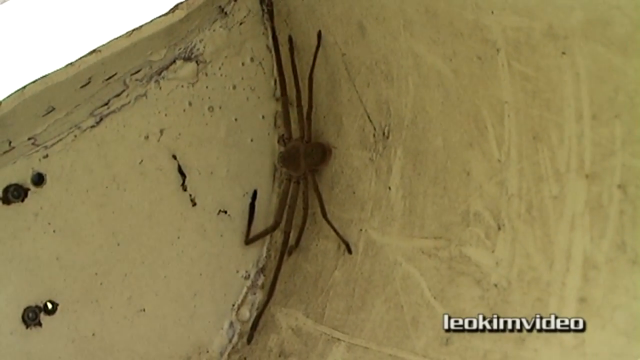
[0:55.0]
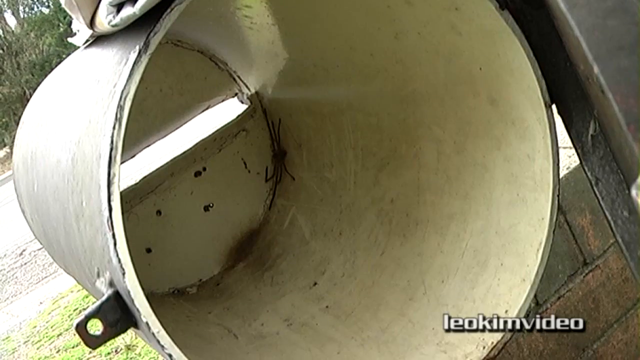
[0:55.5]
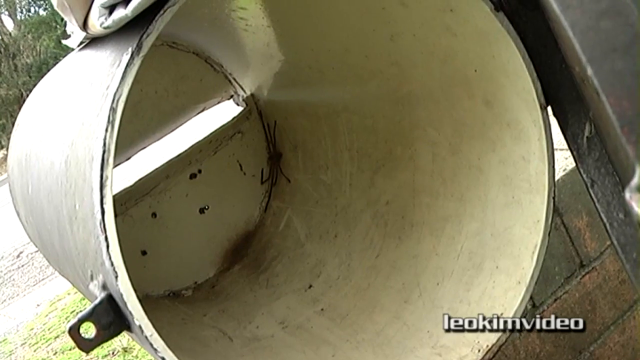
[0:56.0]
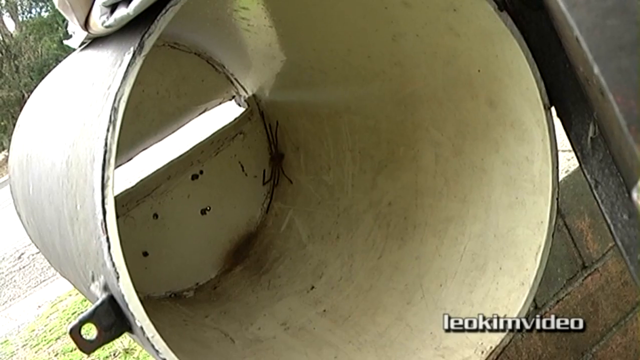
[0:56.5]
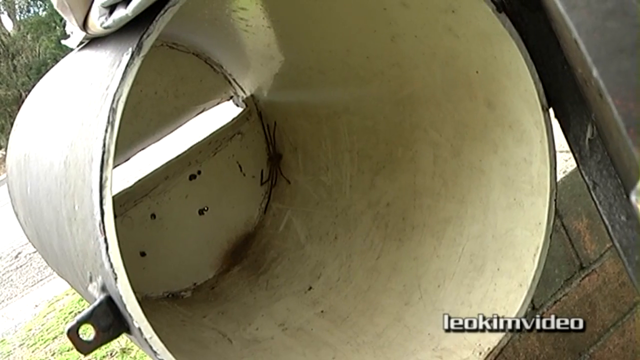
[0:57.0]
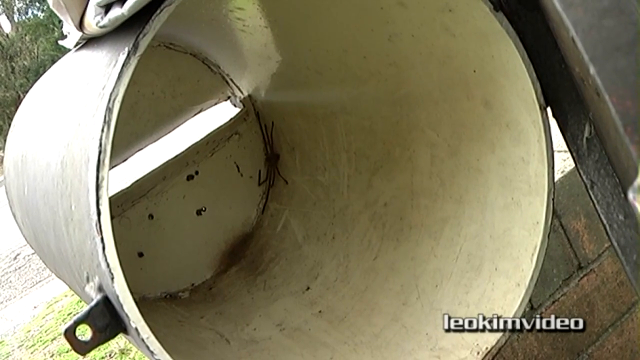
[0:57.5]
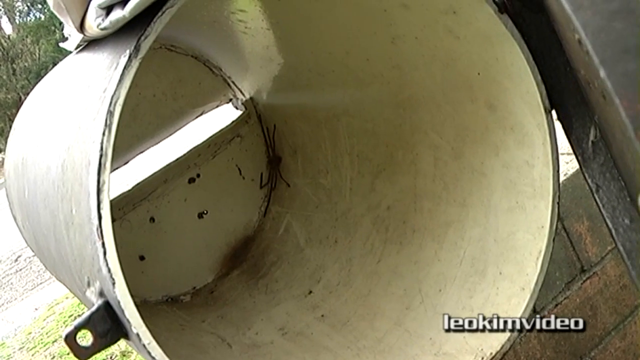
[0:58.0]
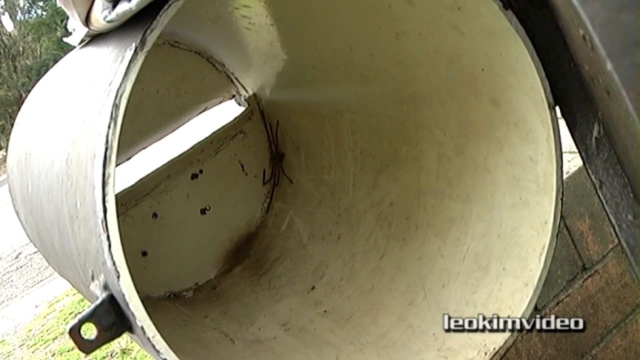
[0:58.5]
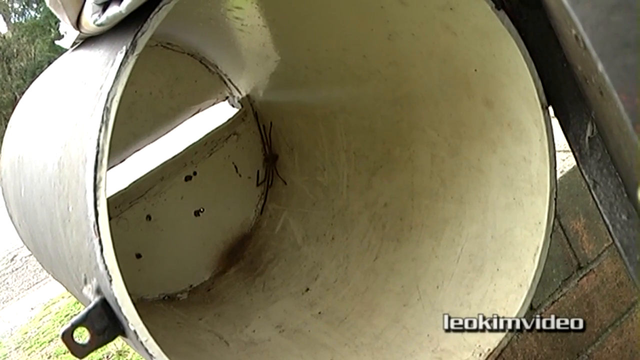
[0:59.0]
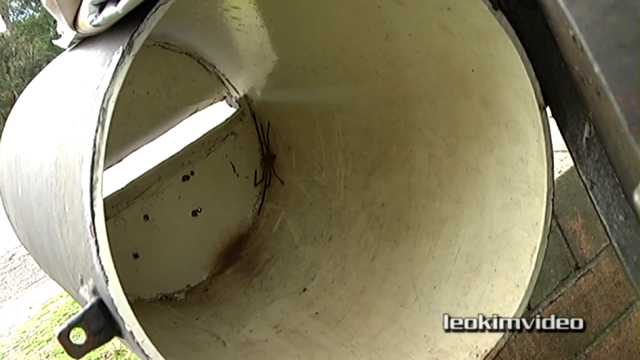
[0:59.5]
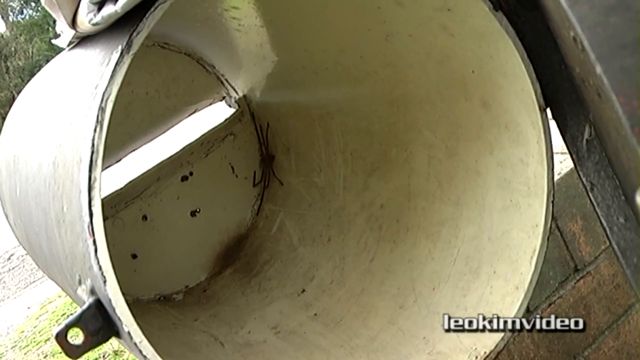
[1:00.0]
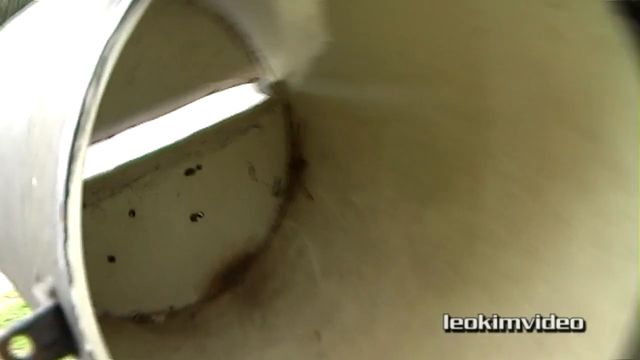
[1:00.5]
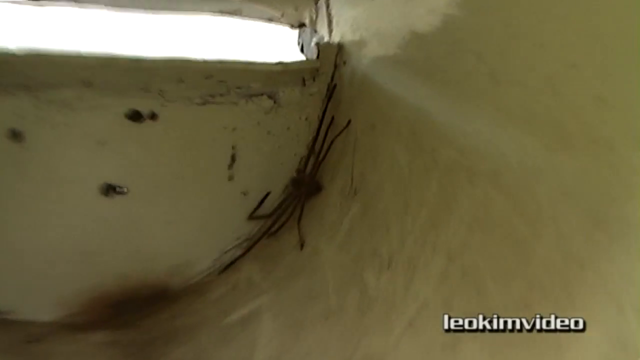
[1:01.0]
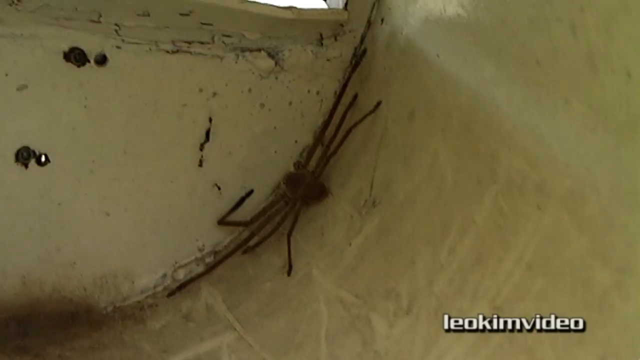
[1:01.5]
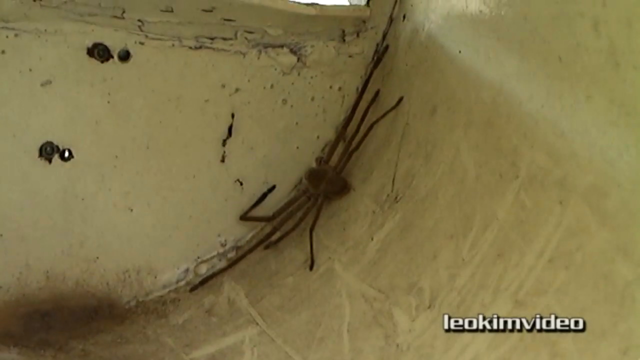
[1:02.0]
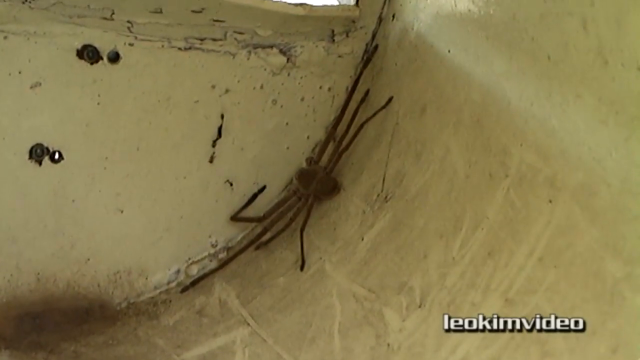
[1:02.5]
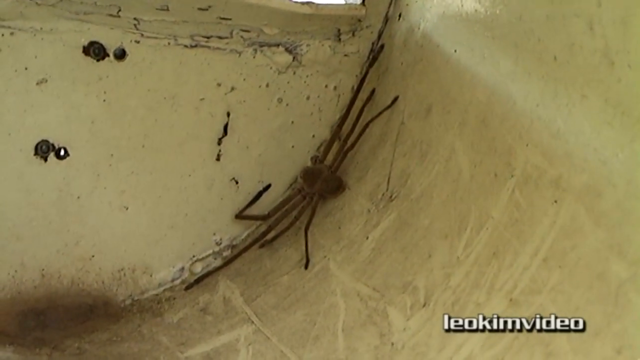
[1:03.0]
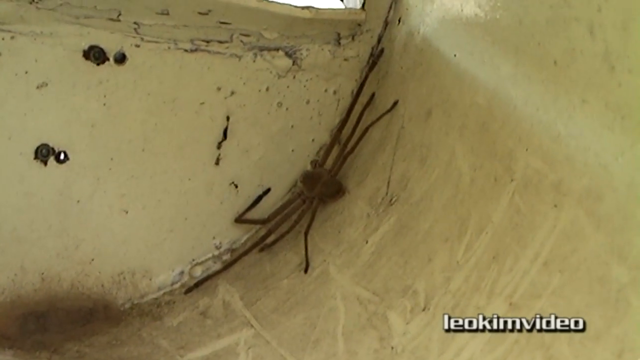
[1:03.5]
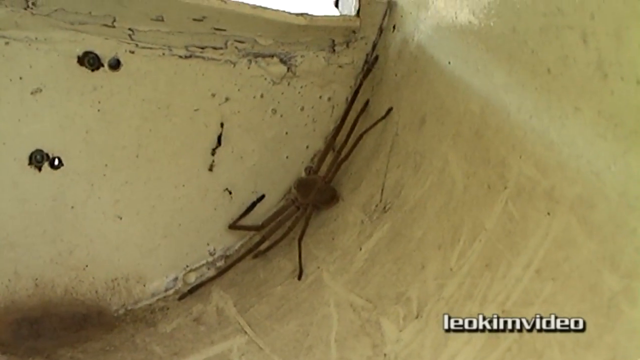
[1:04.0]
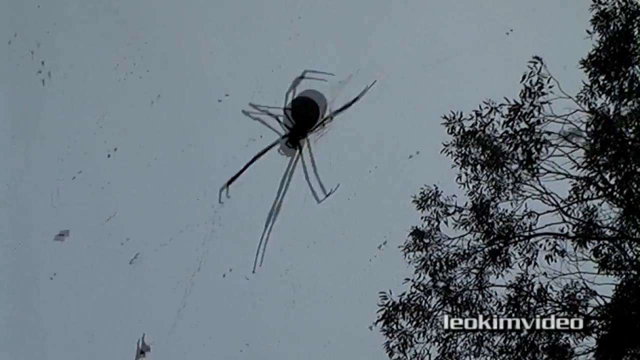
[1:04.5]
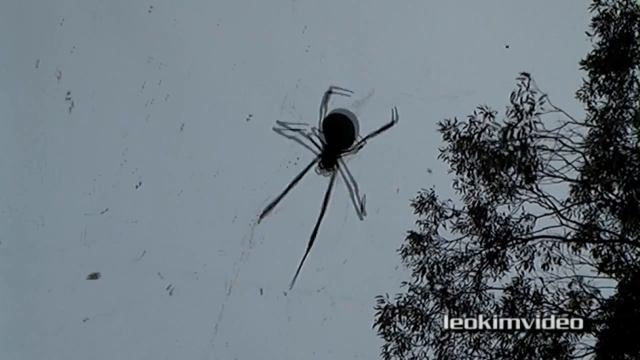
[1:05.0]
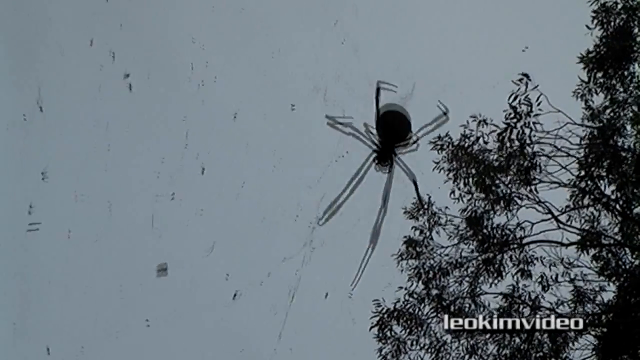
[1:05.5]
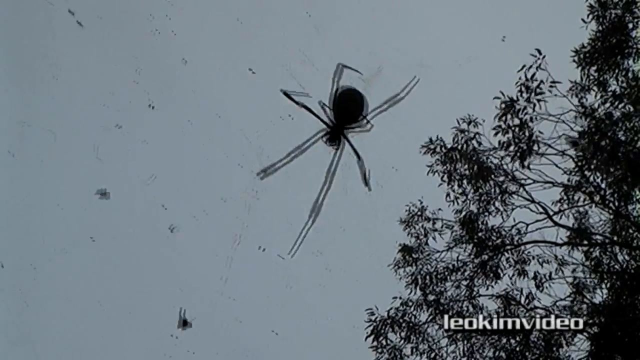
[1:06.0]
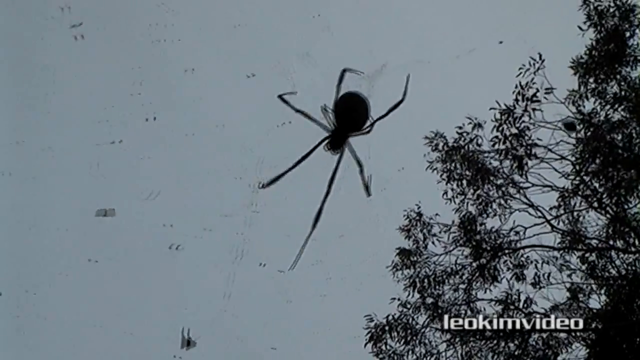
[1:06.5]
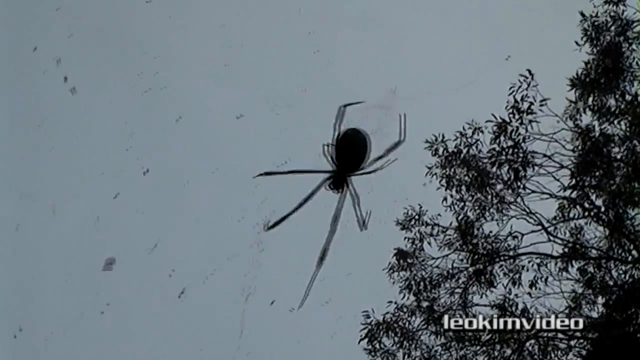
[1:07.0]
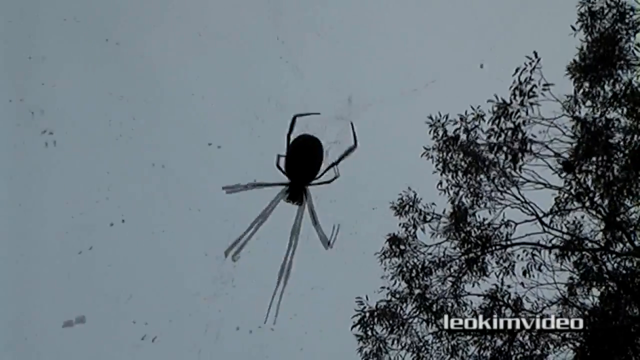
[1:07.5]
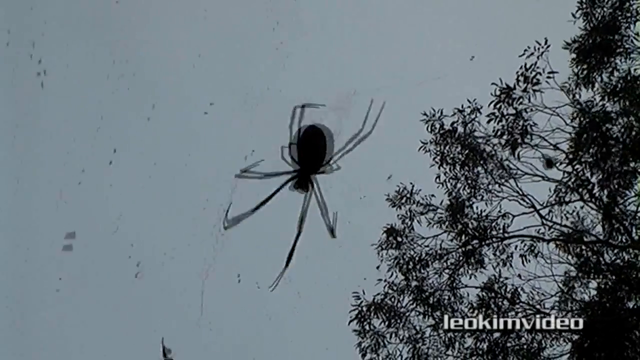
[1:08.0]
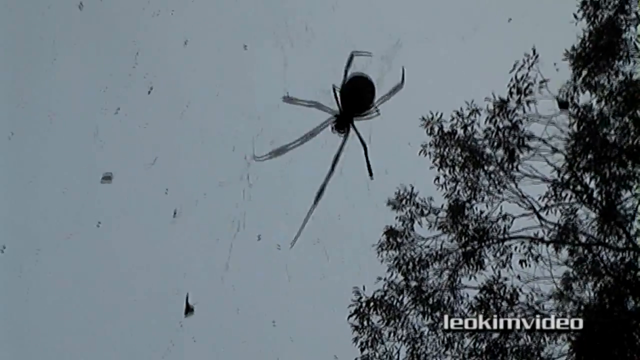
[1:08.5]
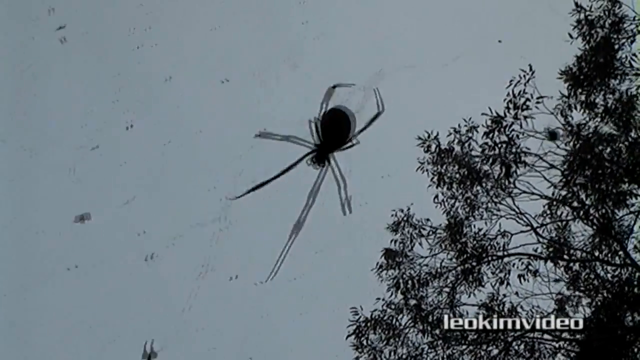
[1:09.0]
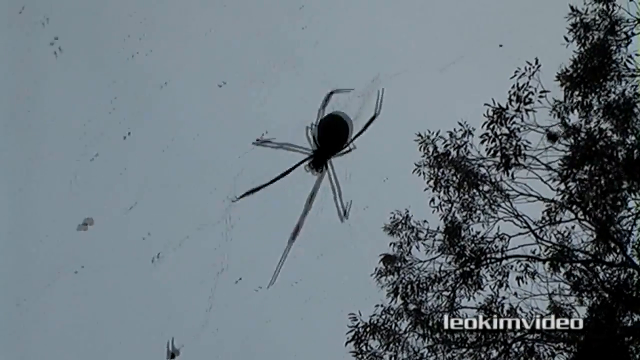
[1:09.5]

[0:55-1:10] The spider is now at the back of the box, and the original spider is still sitting there. A new spider appears in its web; it has a different shape, with a long oval body and a very round head. The shot points toward the sky, so there is essentially no background. The web blows back and forth in the wind, and the spider moves back and forth with it. This spider has eight legs: two very small legs close to the body and six very long legs farther from the body. Things are caught in the web, possibly just dirt and dust. Both spiders look pretty big.